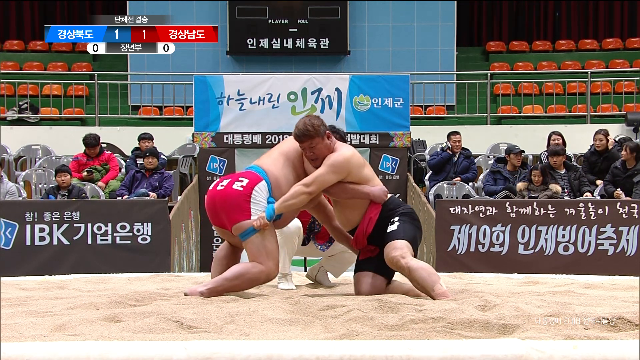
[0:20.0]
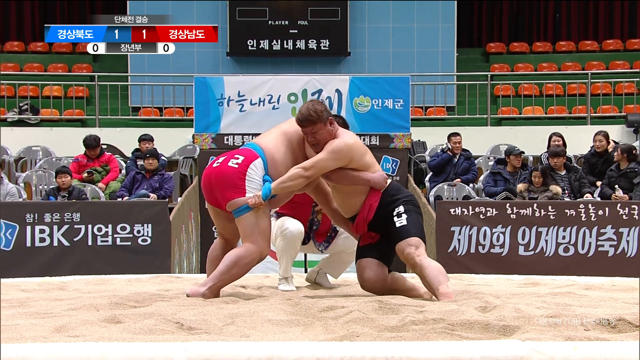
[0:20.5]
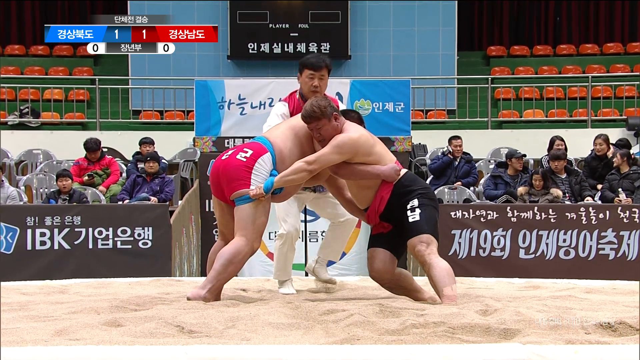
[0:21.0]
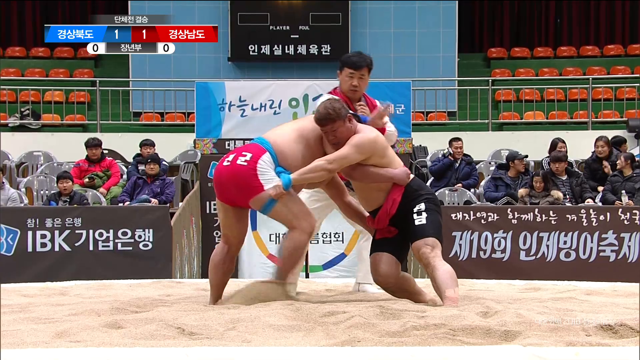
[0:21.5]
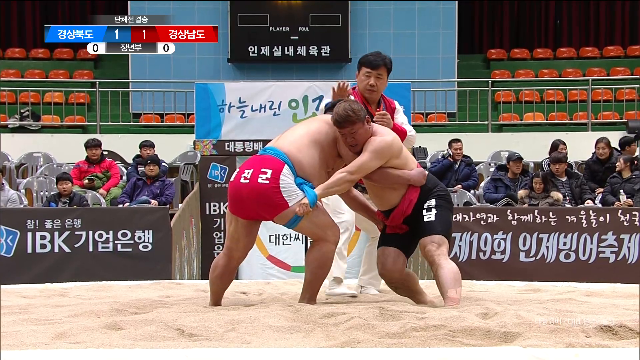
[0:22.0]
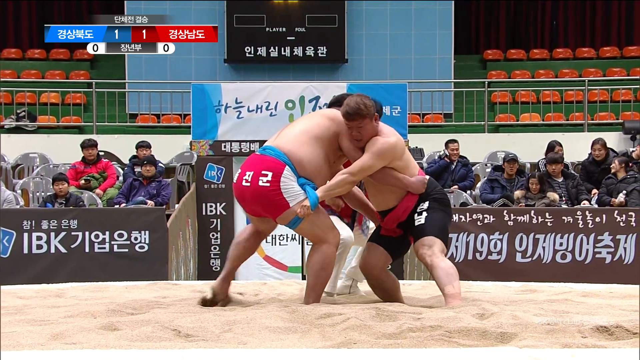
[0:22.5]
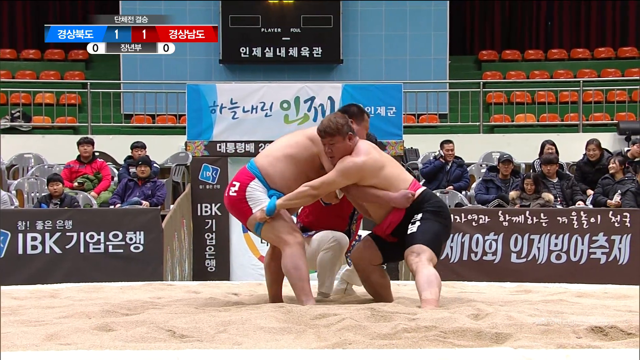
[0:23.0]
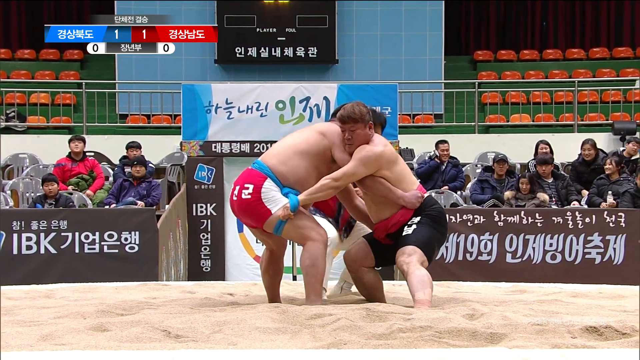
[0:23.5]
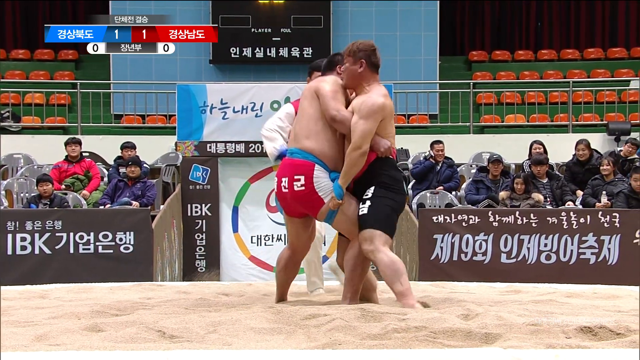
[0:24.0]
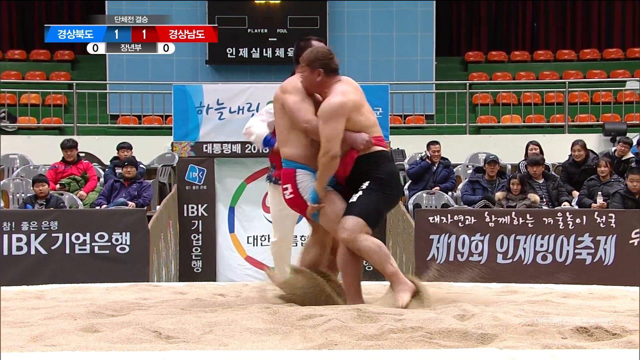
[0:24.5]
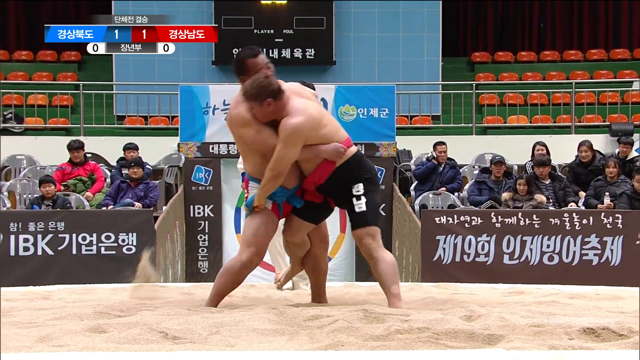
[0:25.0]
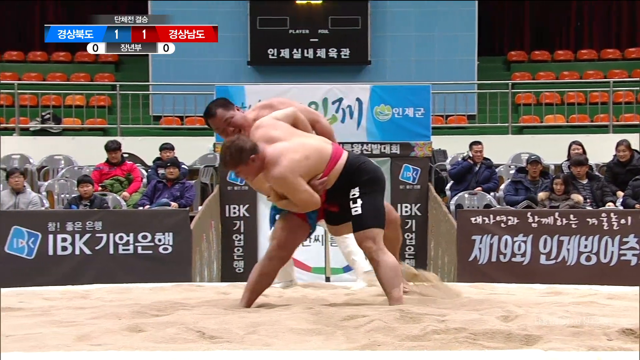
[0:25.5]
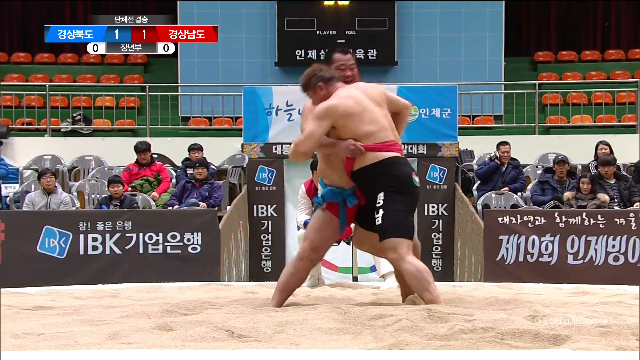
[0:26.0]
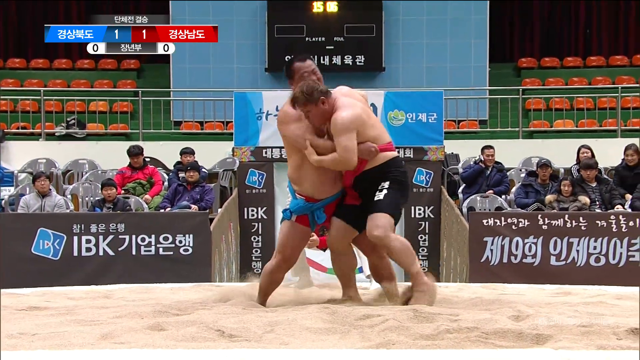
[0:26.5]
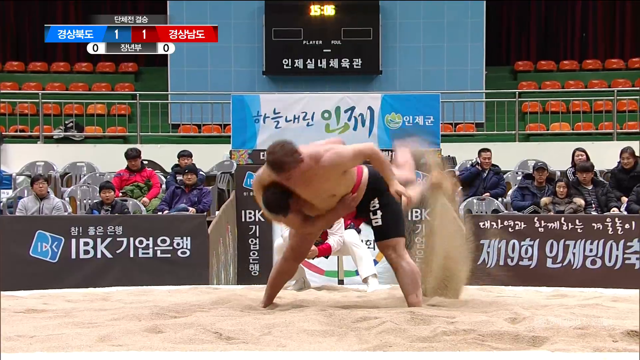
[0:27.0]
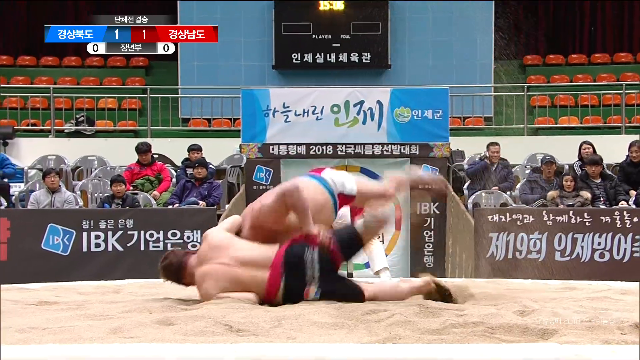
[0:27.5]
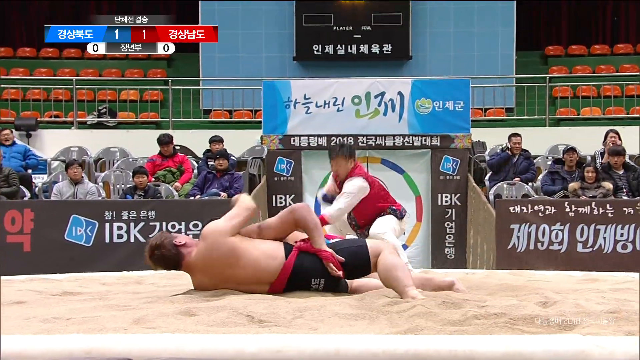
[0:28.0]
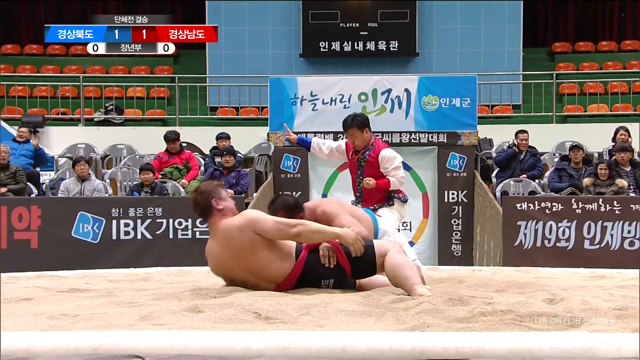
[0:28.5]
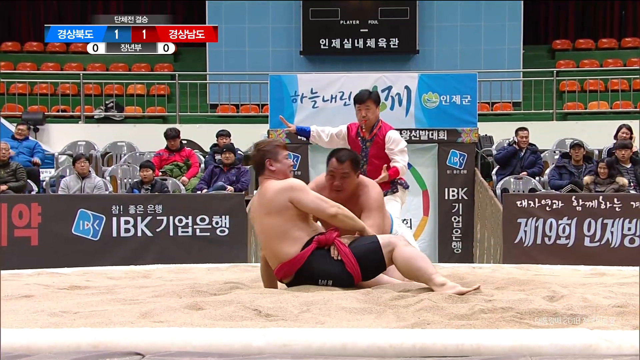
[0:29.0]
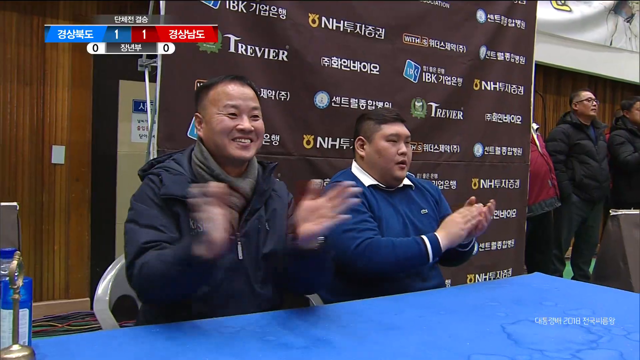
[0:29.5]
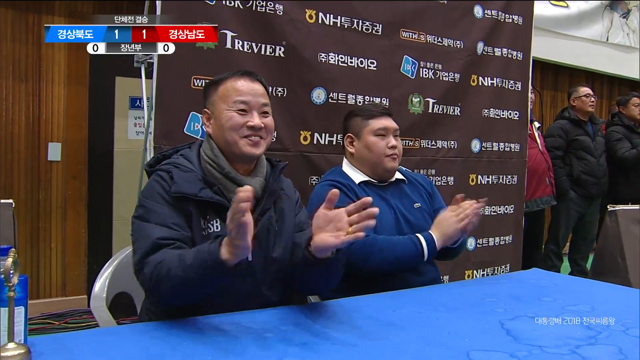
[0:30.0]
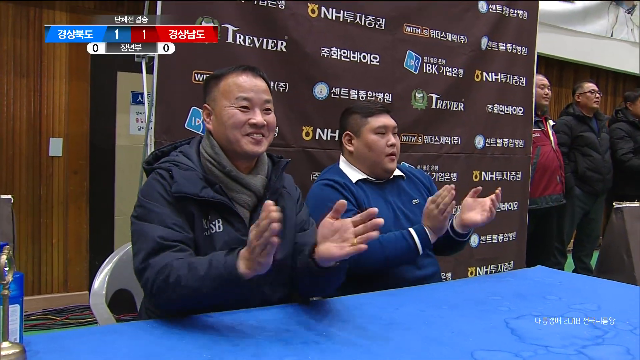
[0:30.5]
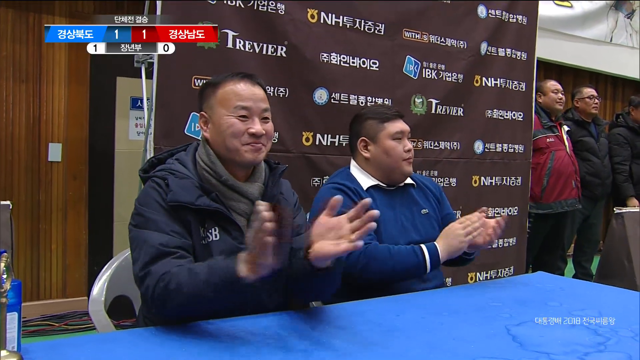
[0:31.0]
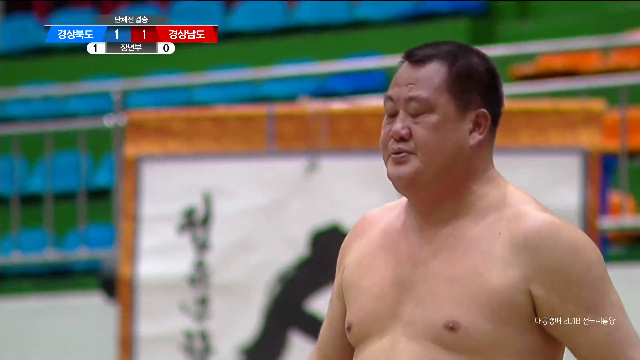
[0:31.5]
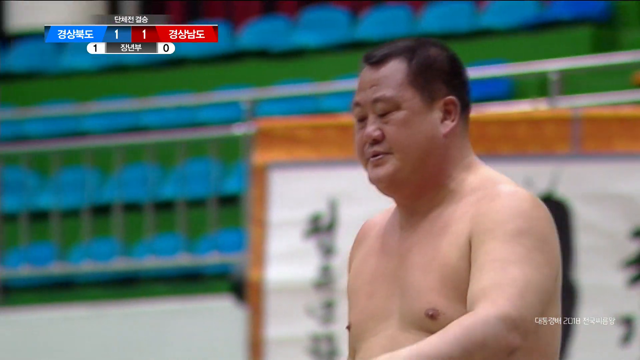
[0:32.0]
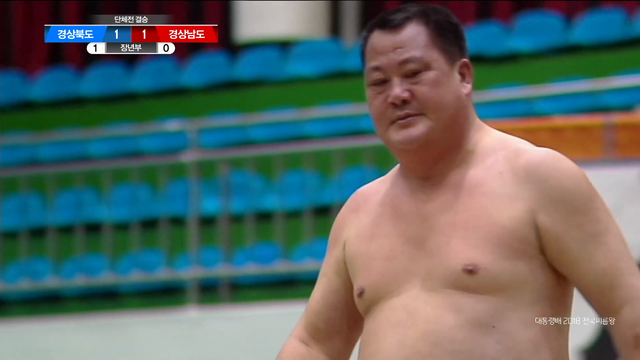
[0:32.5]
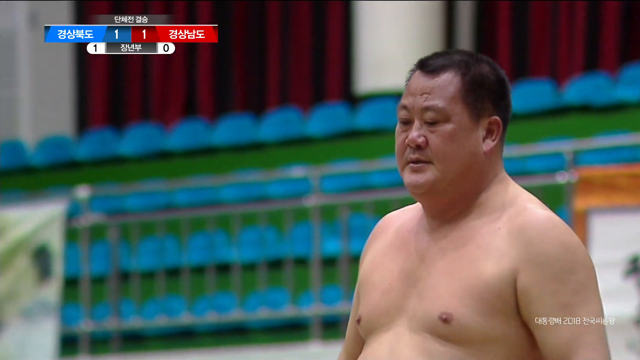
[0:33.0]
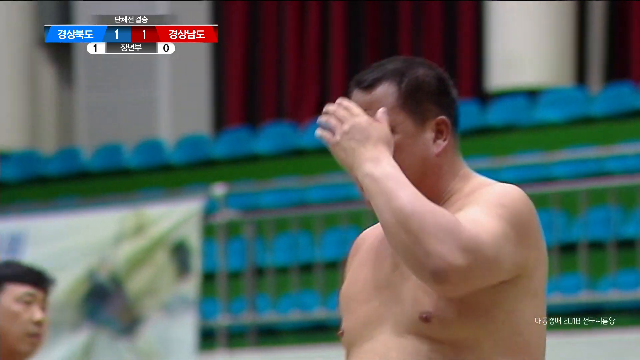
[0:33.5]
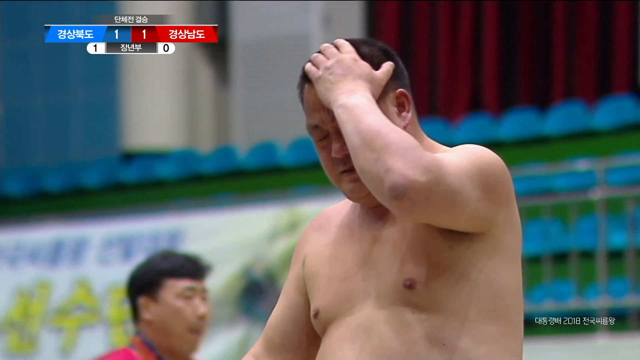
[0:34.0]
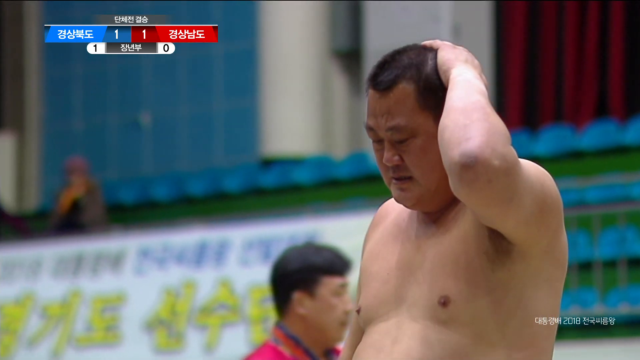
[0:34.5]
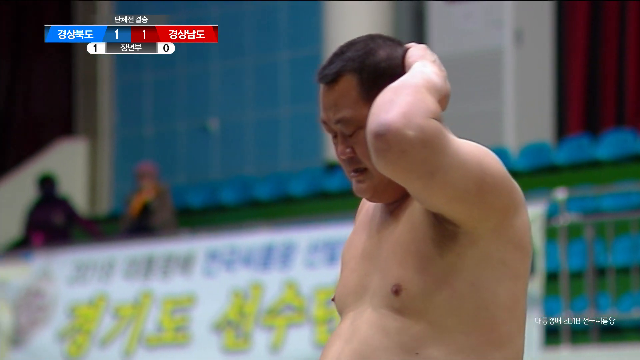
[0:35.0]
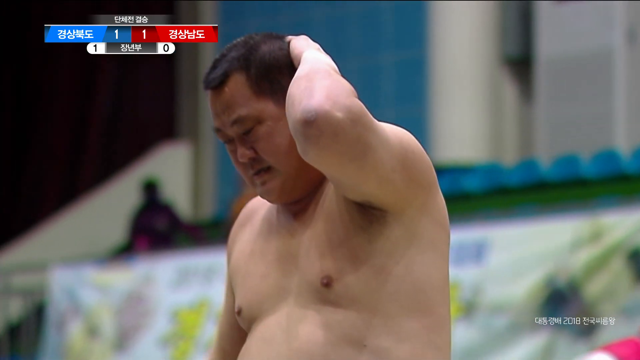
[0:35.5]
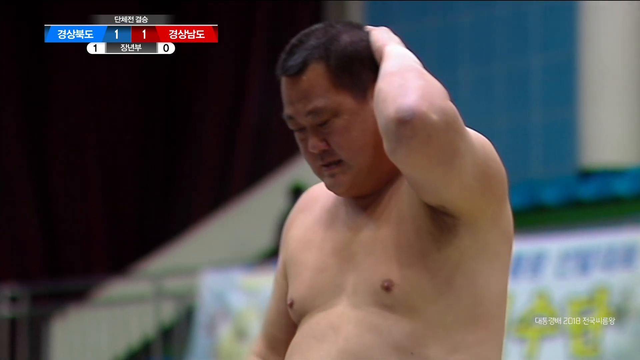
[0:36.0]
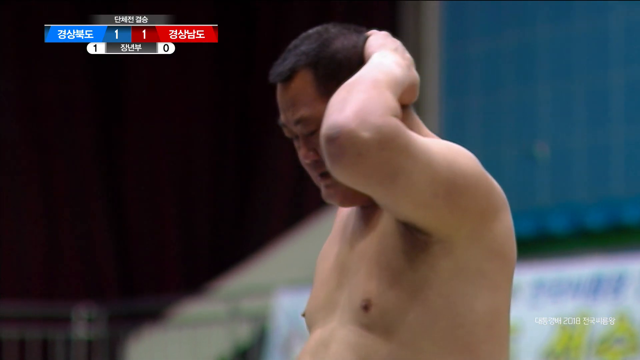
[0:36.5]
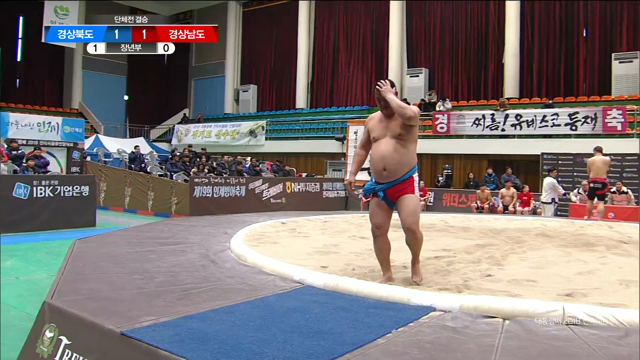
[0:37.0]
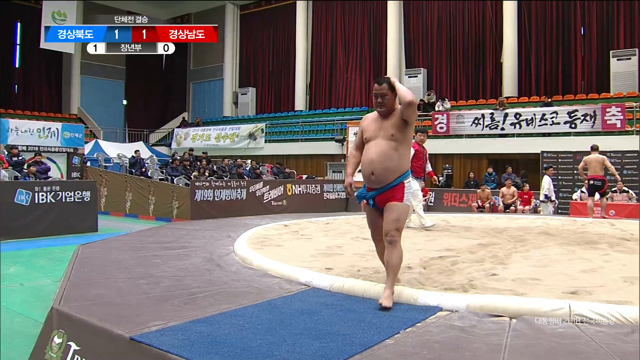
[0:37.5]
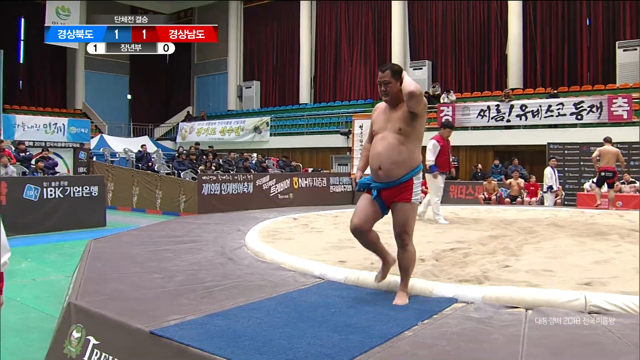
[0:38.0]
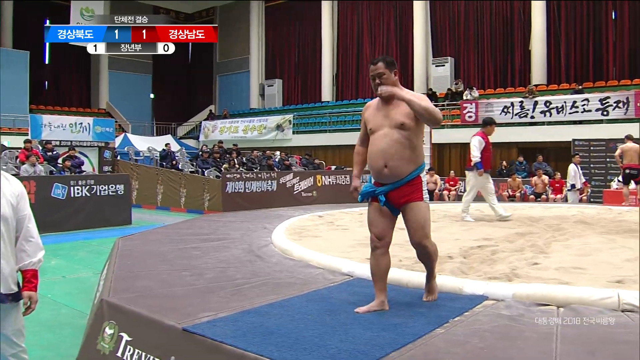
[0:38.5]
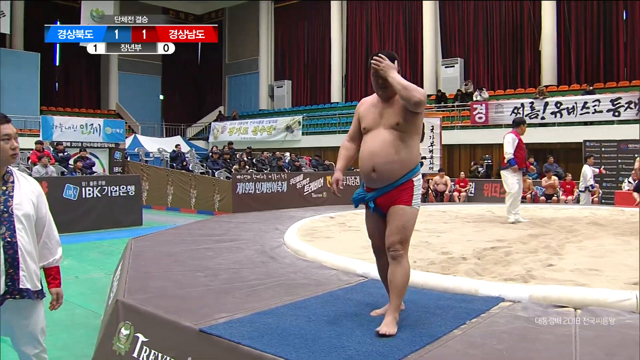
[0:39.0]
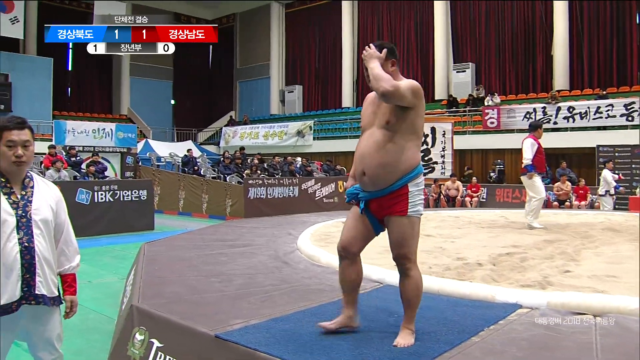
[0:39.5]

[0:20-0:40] As the two men continue to wrestle, the sash is visible wrapped around their waists and maybe also around one of their legs. Both men are now on their feet, still in an embrace with their heads on each other's shoulders, standing upright and tugging on each other's sashes. The man on the right has black shorts and a red sash; the man on the left has white shorts and a blue sash. The man in the black shorts is thrown to the ground by the other man, and the referee starts waving his arms. Two men sitting on a blue table clap their hands. One of the wrestlers stands and walks off the sand. A scorecard in the upper left corner has unreadable text but shows one to one: blue has one and red has one. The man with the red and white shorts and the blue sash walks off and stands on a pad at the side of the circle of sand.